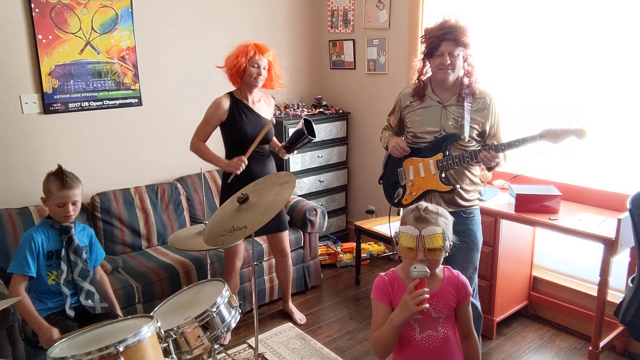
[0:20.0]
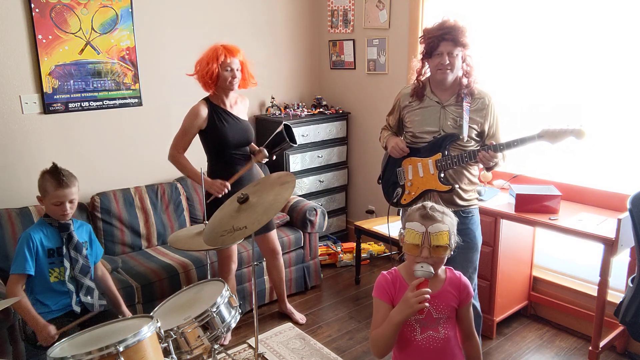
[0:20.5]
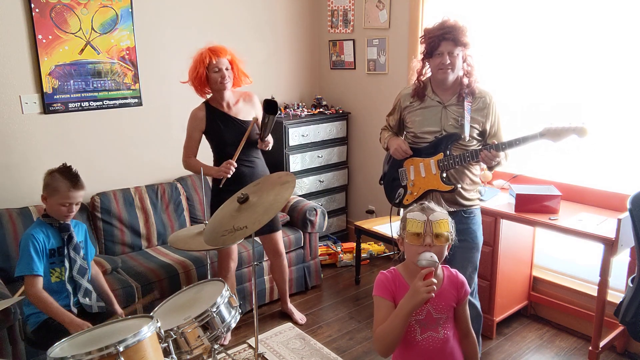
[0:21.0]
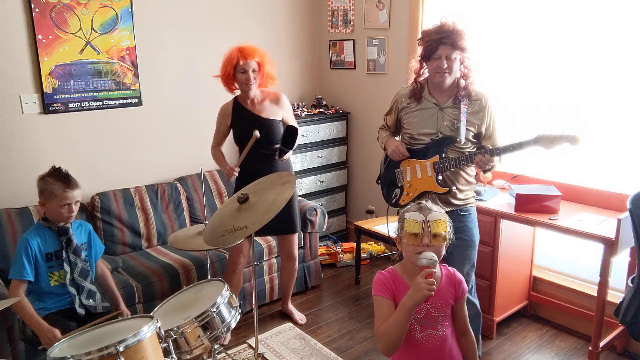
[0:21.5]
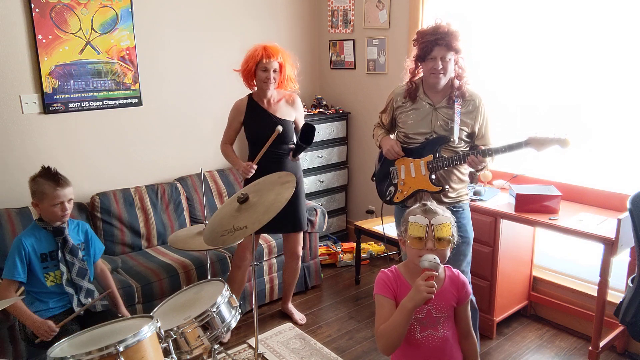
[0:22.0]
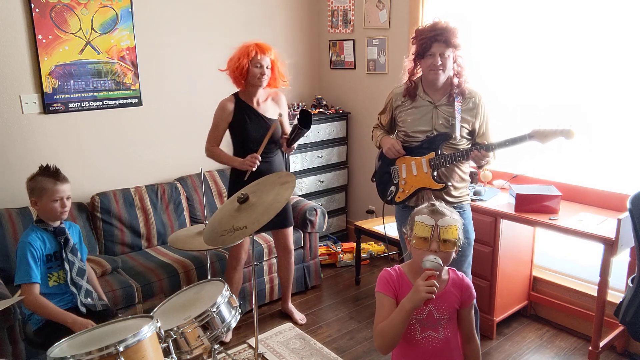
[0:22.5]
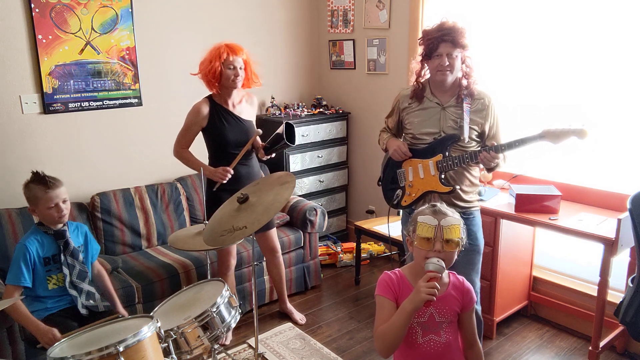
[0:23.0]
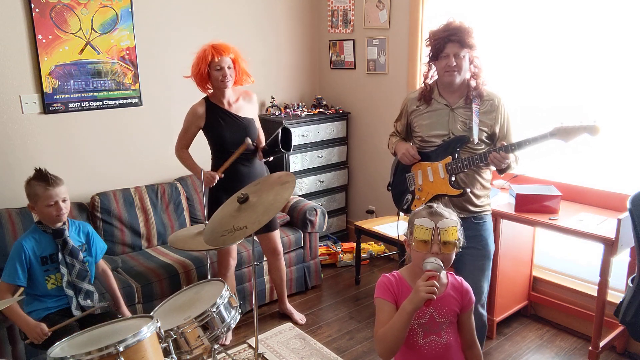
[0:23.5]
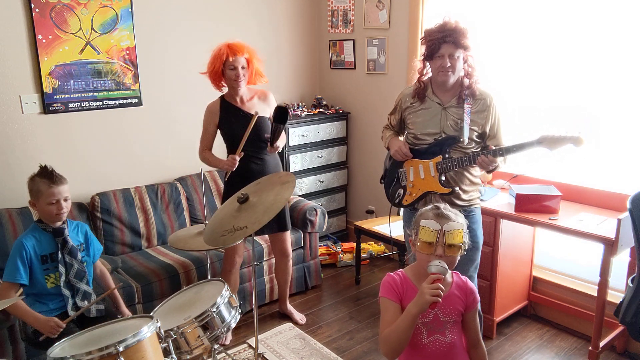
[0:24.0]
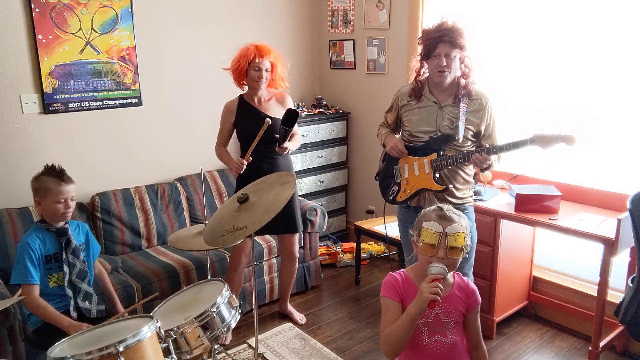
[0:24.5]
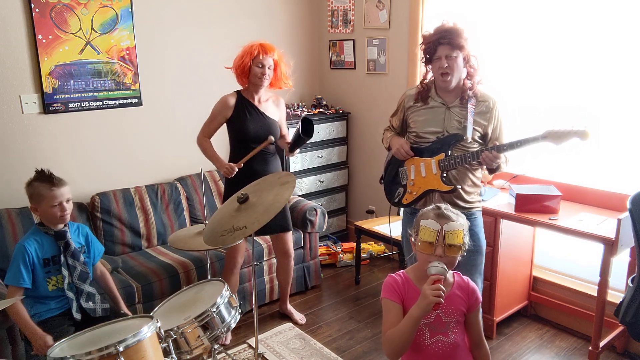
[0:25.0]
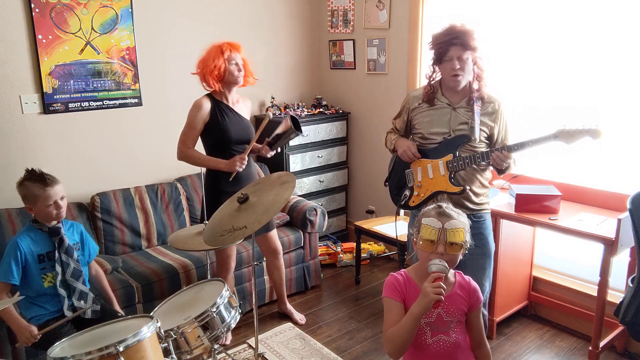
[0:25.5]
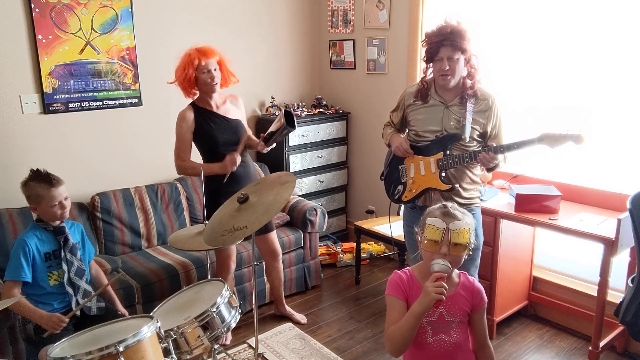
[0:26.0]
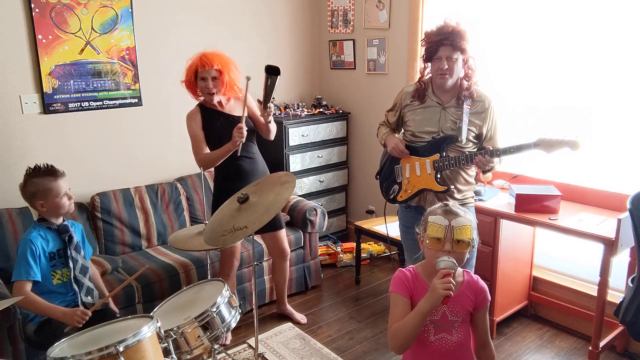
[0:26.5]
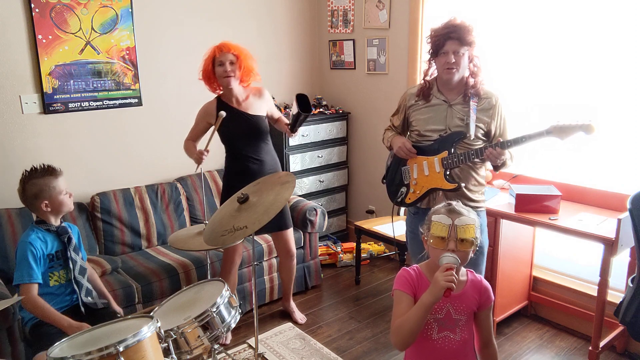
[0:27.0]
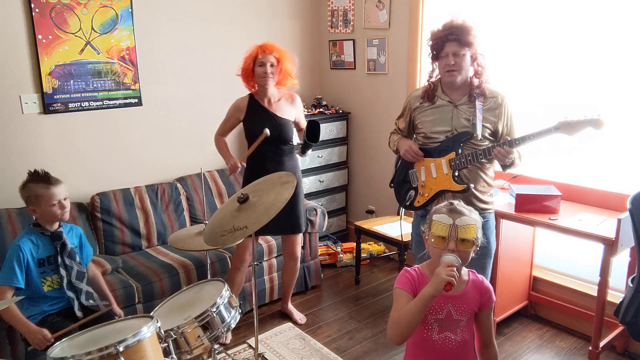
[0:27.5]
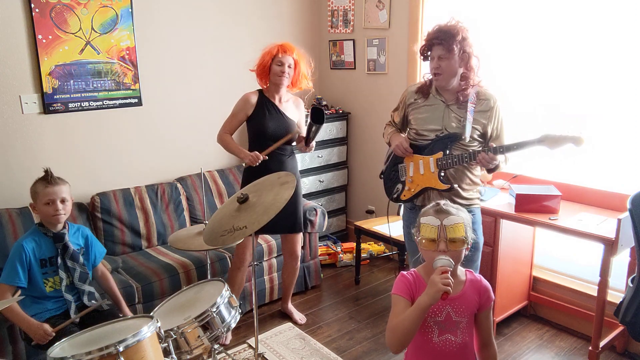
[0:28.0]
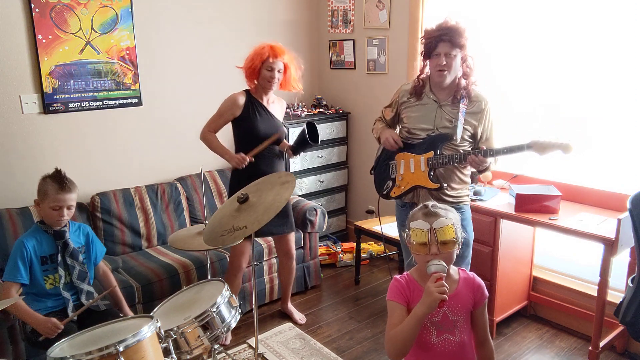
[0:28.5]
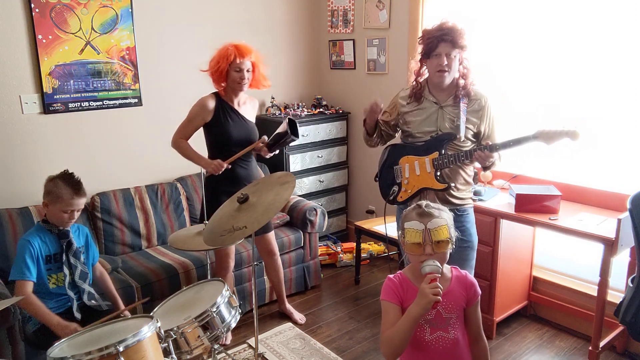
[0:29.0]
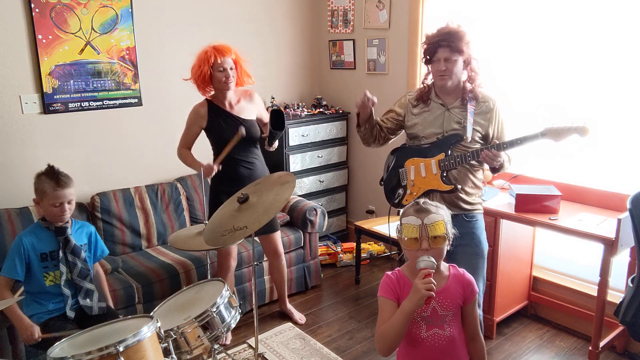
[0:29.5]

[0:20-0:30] Everyone keeps playing their instruments. The youngest, the daughter, is apparently singing into a microphone that is red on the handle and gray at the top, while the other family members play. The boy plays the drums and has a tie on, probably his father's. The mom holds something like a cowbell and hits it with a drumstick; she has an orange wig on, no shoes, and a black sleeveless dress. The father has a brown wig on and holds an electric guitar, with its cord visible.